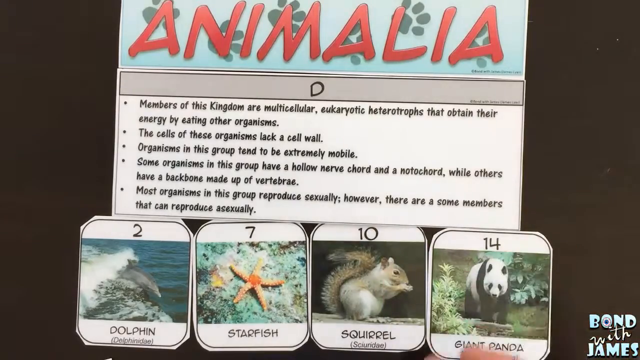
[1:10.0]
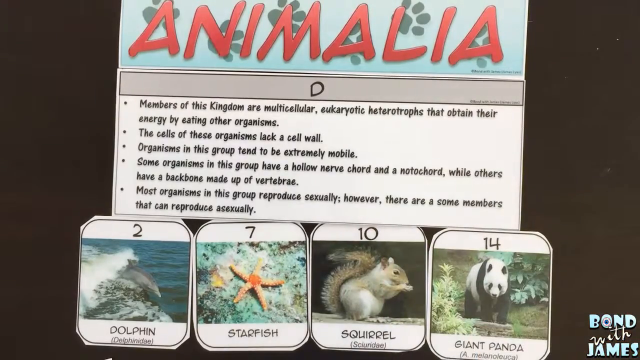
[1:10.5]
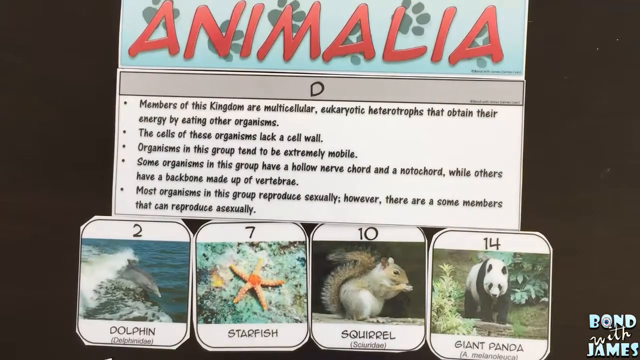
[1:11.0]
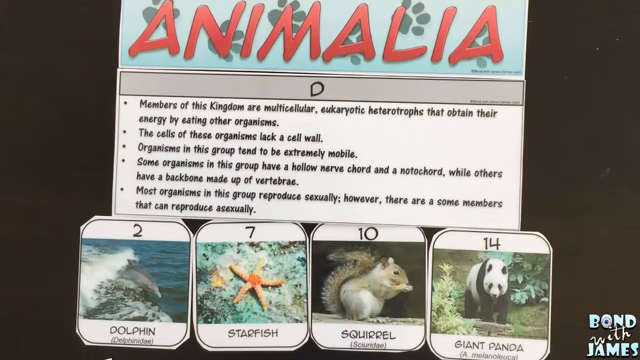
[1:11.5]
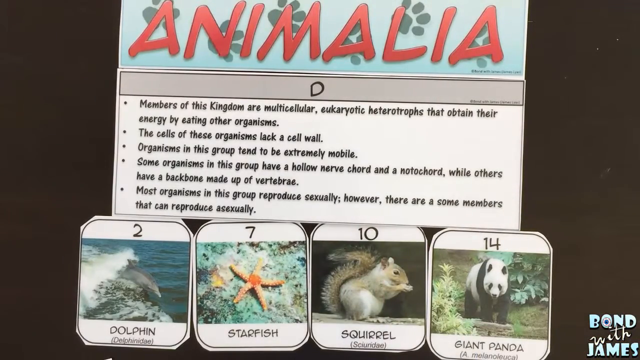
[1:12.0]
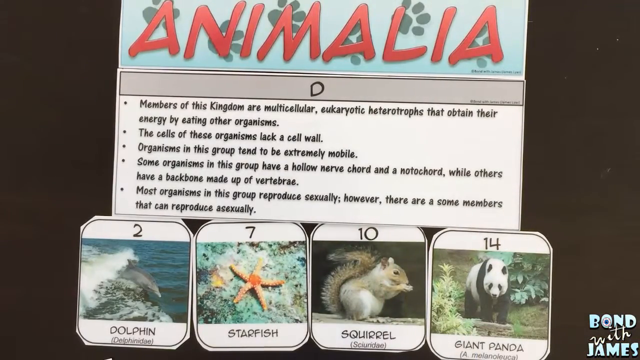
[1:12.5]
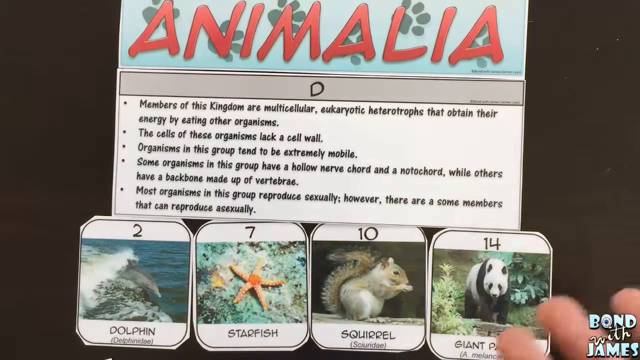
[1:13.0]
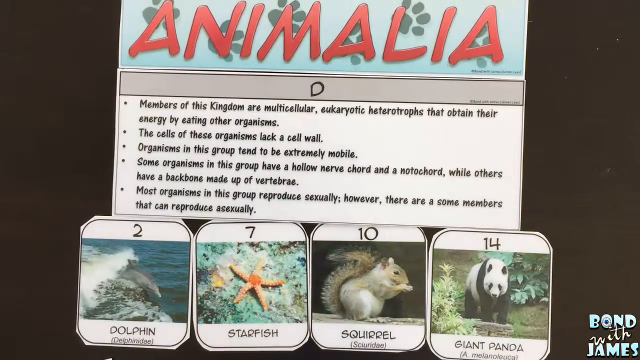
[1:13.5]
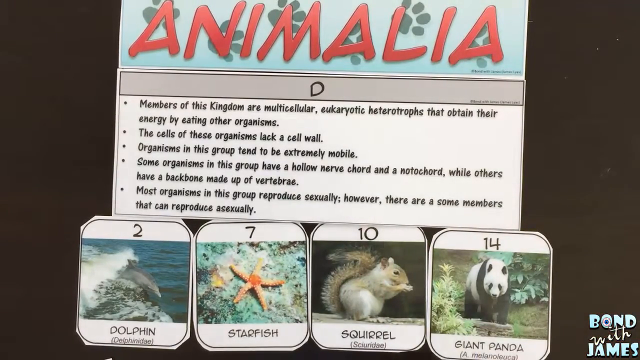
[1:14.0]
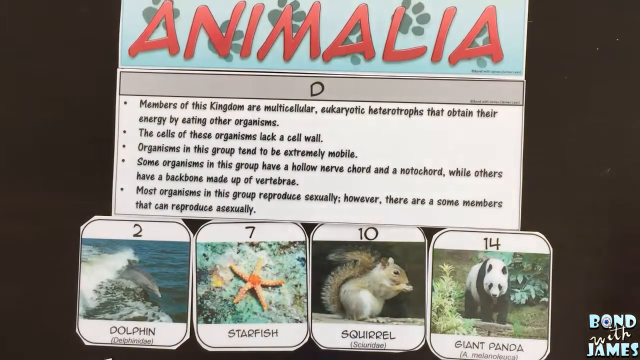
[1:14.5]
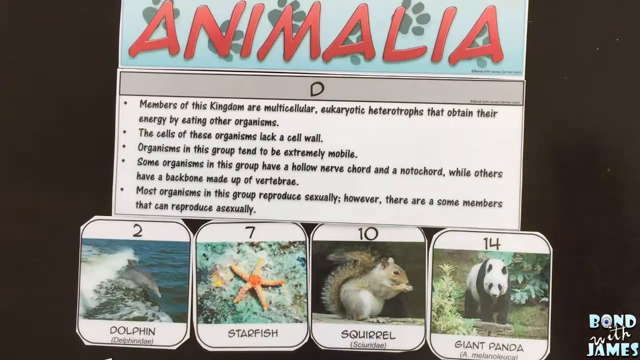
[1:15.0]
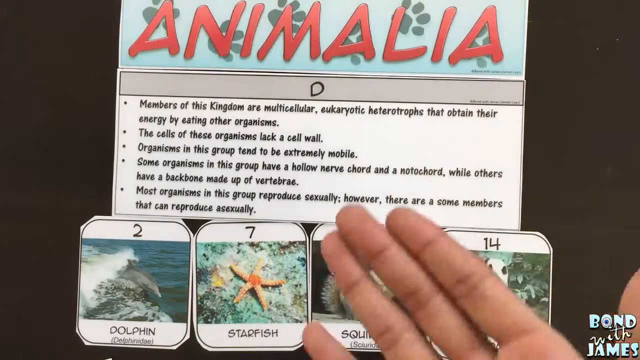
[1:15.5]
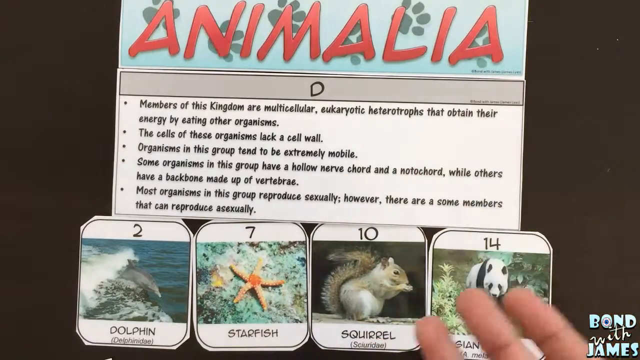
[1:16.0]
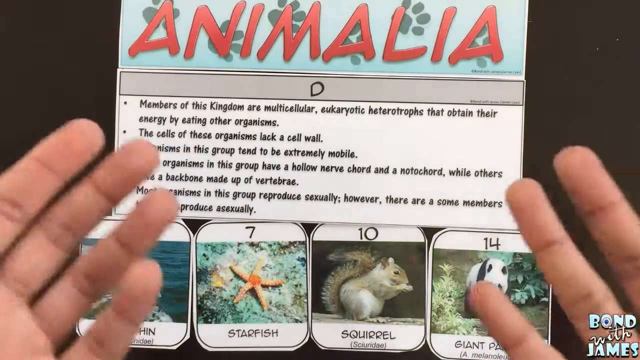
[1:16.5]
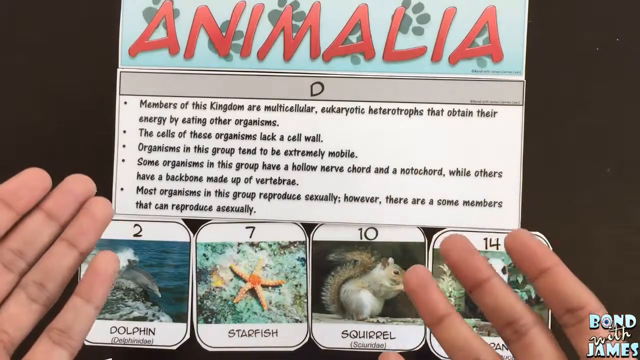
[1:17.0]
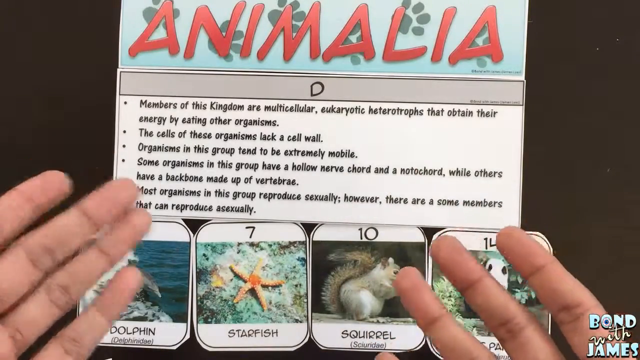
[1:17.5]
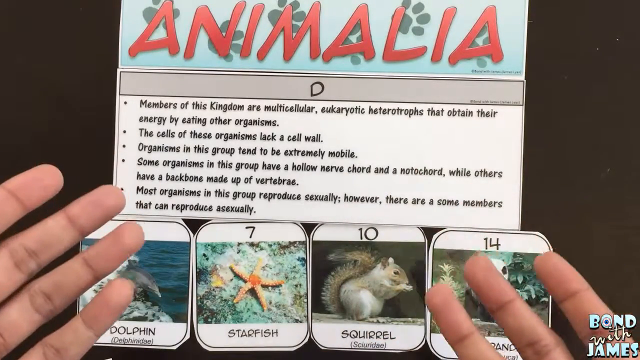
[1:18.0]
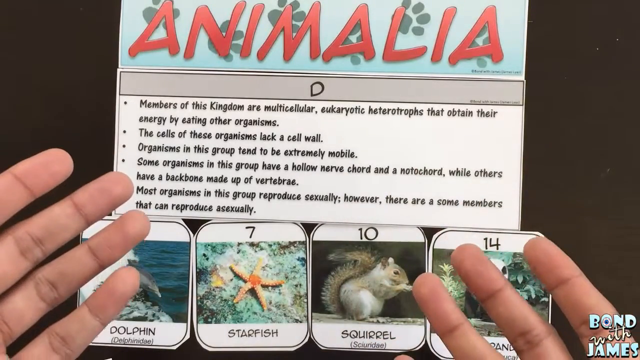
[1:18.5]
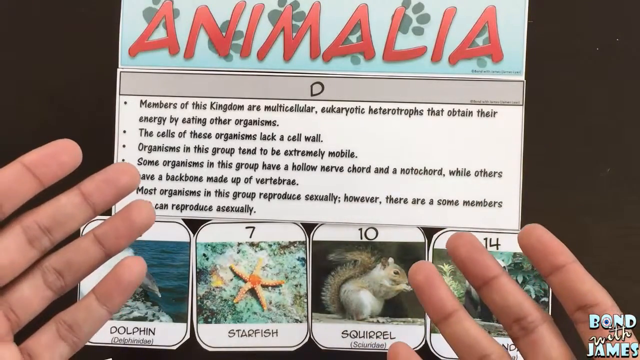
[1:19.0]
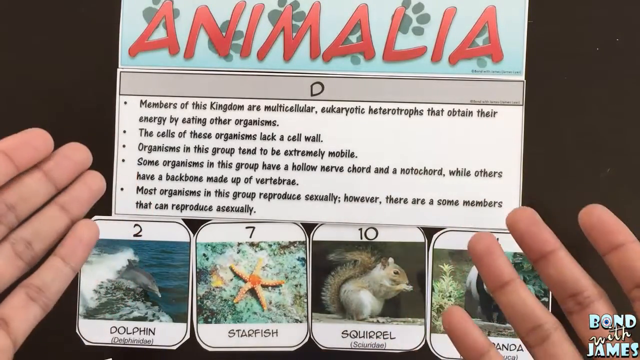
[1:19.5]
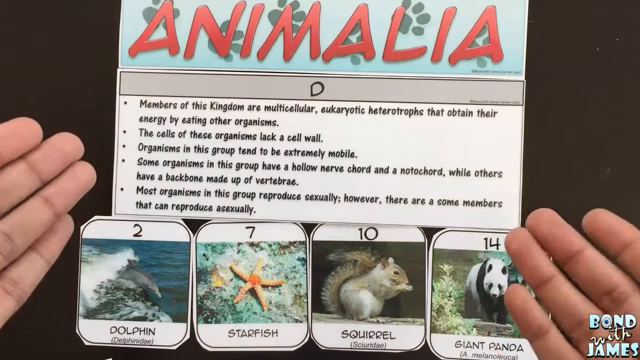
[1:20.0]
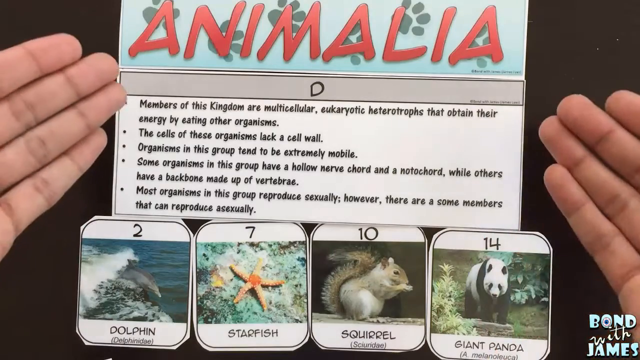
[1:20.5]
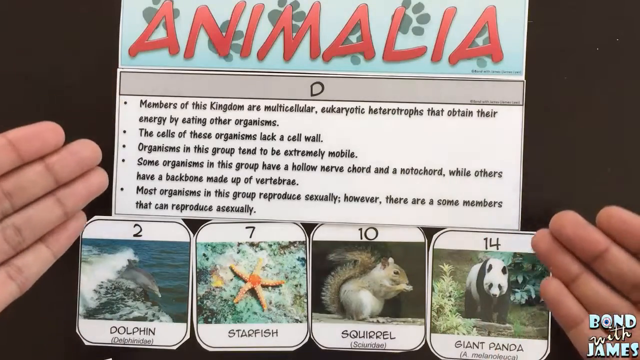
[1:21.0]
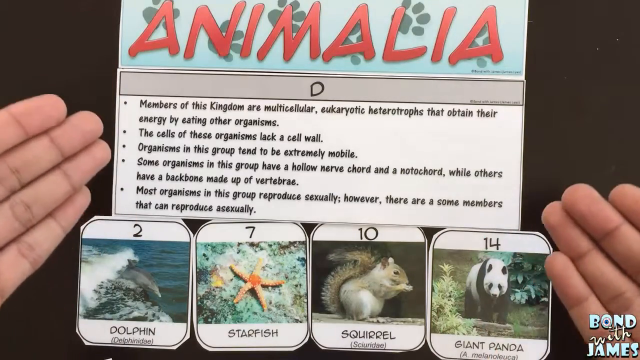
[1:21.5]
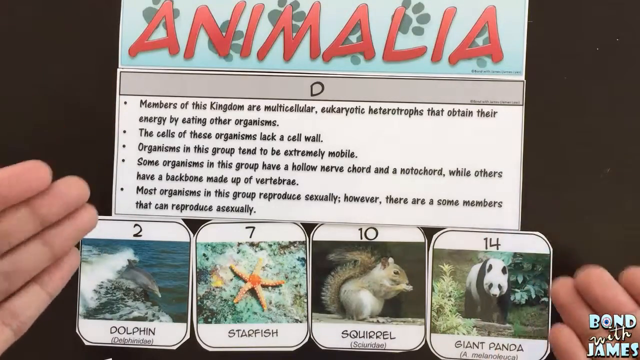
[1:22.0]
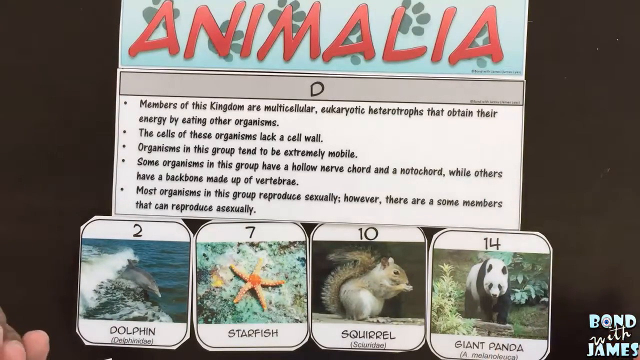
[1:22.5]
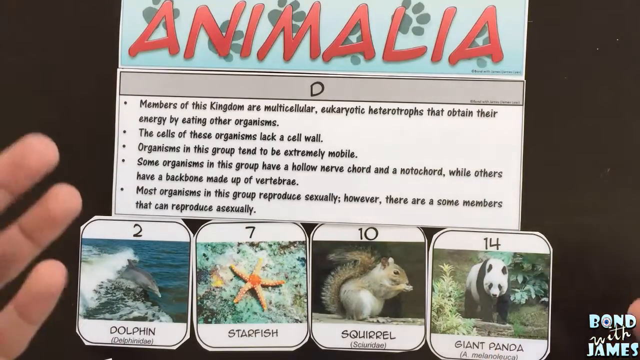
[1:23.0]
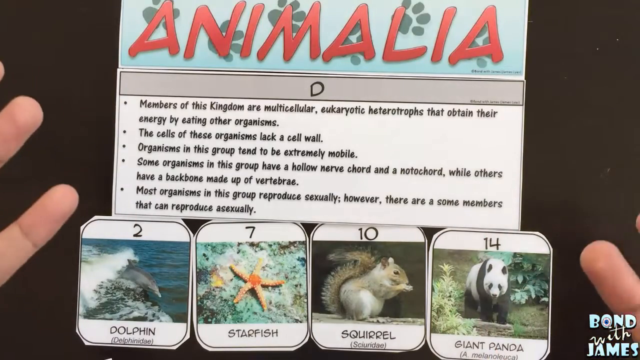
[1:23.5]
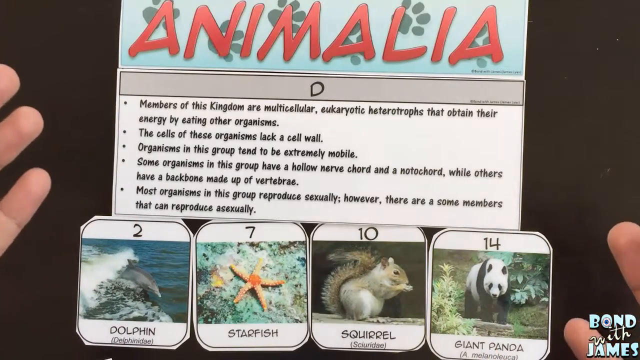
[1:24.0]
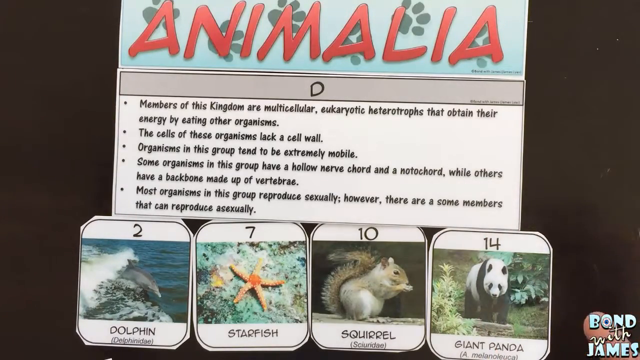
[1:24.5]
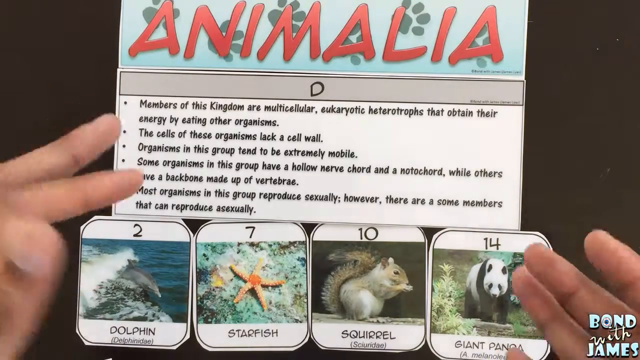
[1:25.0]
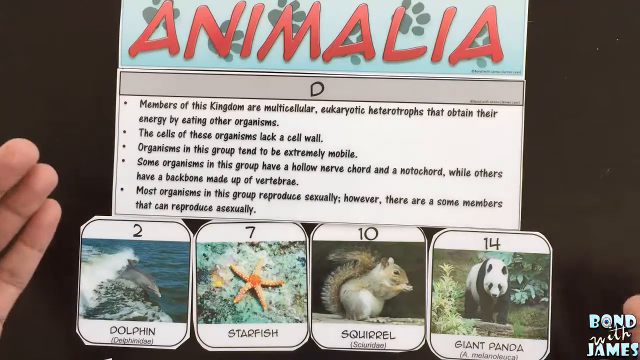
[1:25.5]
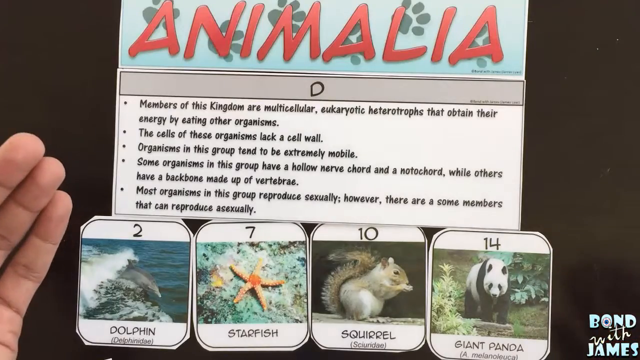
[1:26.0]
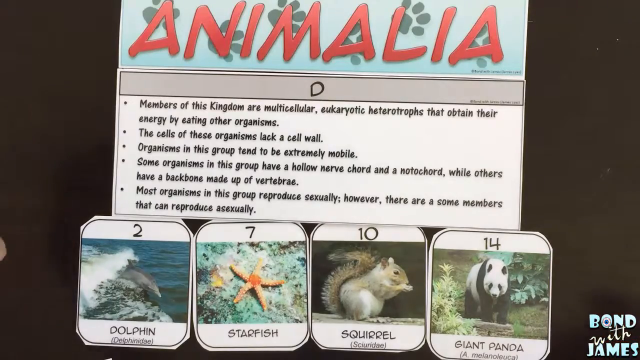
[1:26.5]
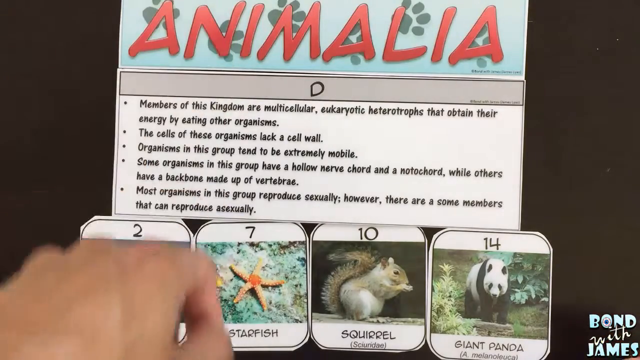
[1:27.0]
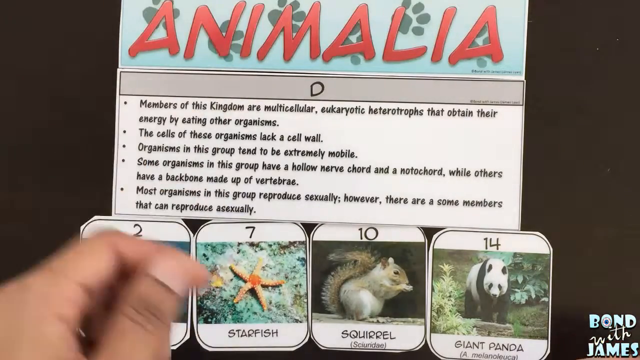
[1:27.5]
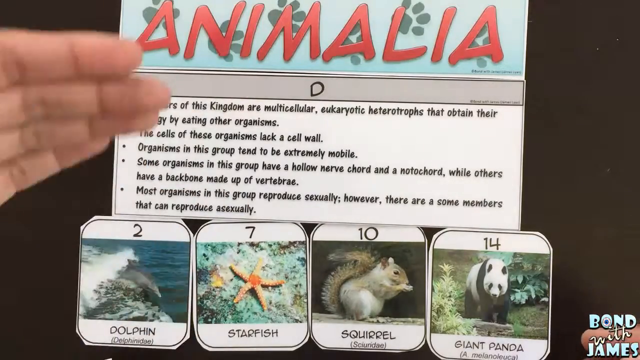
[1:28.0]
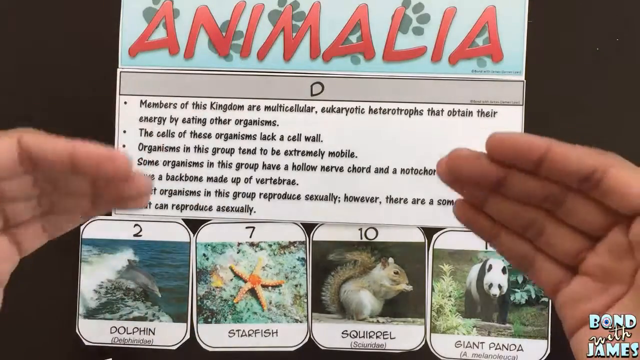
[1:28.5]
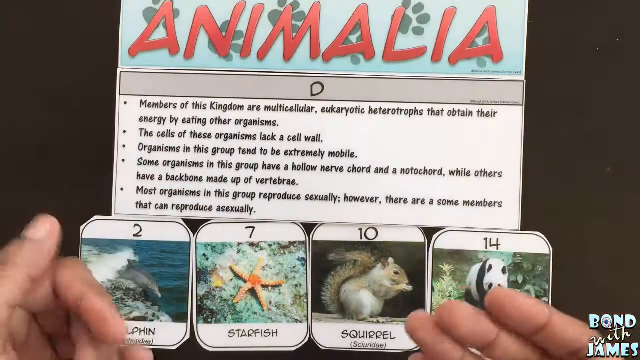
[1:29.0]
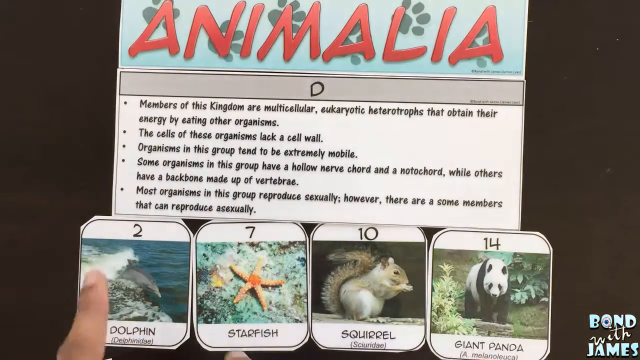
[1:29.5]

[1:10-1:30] Papers are on top of a table. At the top is a paper with "Animalia" written in capital red letters on a blue background, with black cat footprints. Under it is a paper labeled with the letter D, with a white background, which reads: "Members of this kingdom are multicellular, eukaryotic, heterotrophs That obtain their energy by eating other organisms The cells of these organisms lack a cell wall Organisms in this group tend to be extremely mobile Some organisms in this group have a hollow nerve cord" and "Most organisms in this group reproduce sexually However, there are some members that can reproduce asexually". Under it are four pictures of different animals: number 2 is a dolphin inside water, number 7 is a starfish, number 10 is a squirrel and number 14 is a panda. A man's hands then move over the pictures, pointing at them; it looks like he is explaining something.